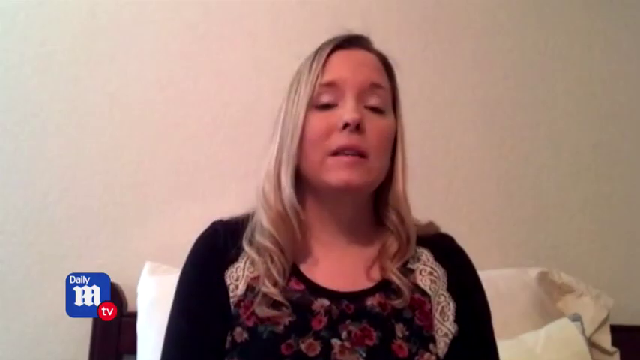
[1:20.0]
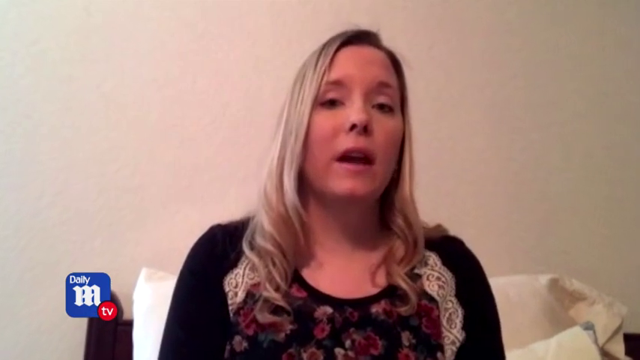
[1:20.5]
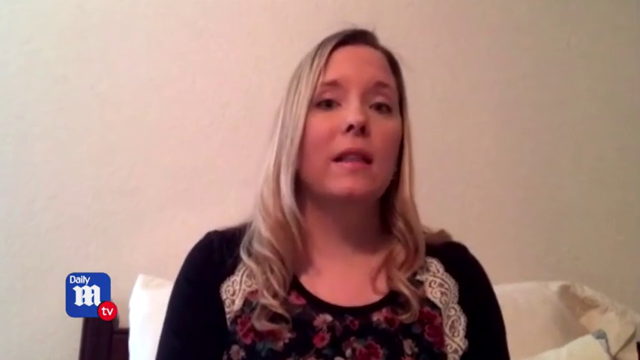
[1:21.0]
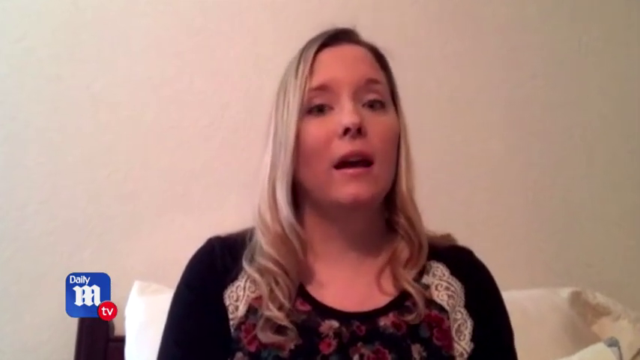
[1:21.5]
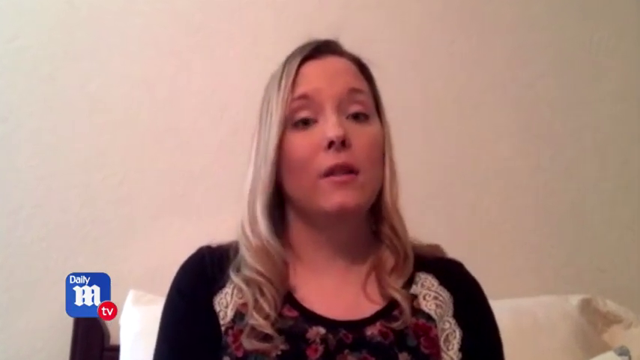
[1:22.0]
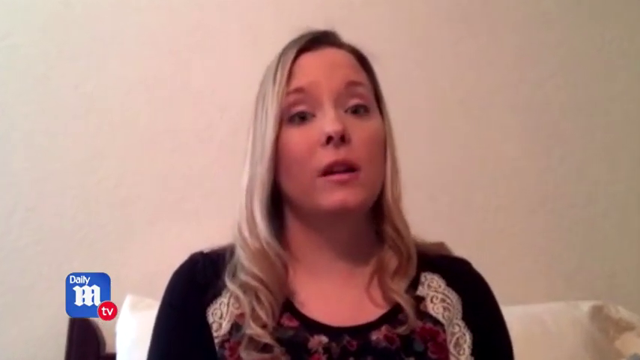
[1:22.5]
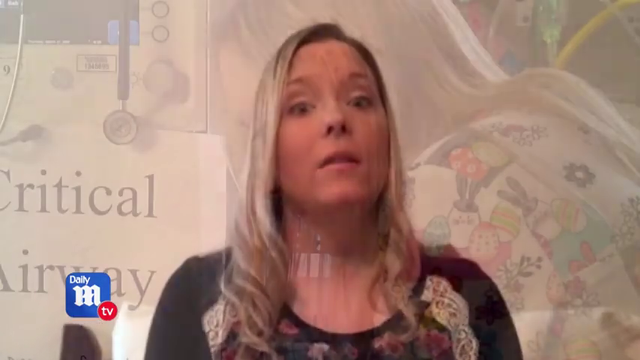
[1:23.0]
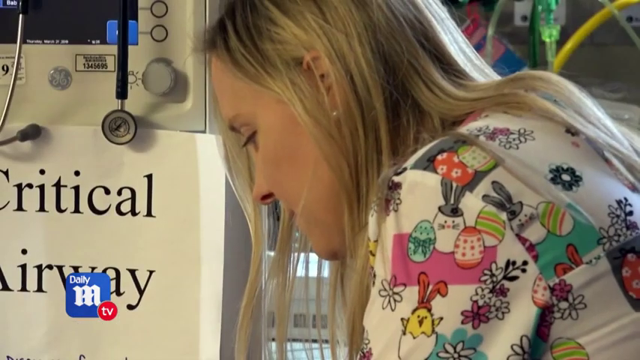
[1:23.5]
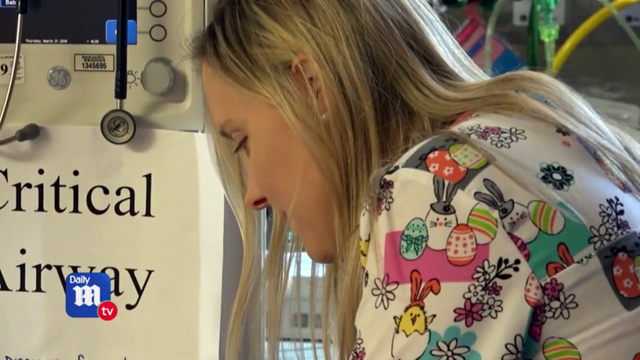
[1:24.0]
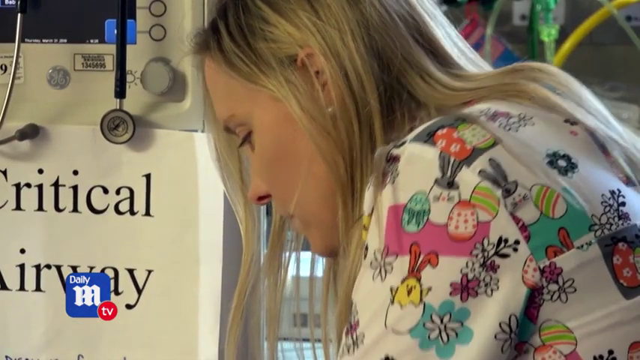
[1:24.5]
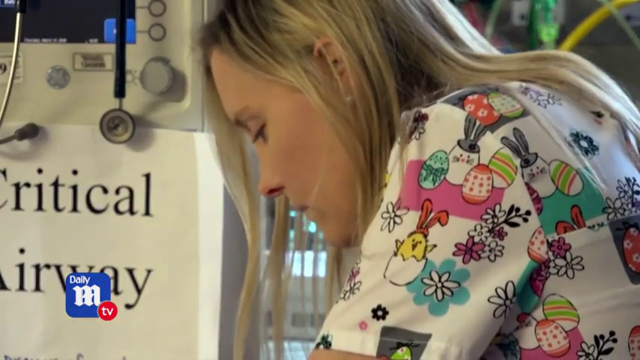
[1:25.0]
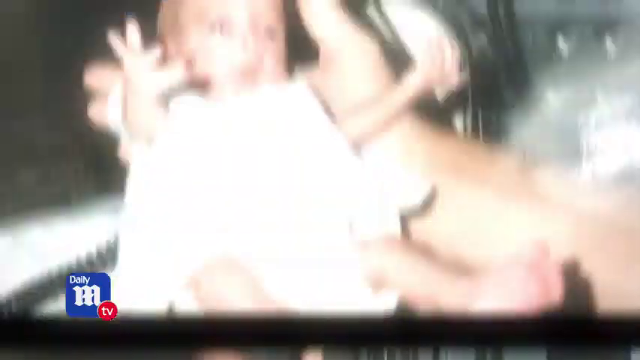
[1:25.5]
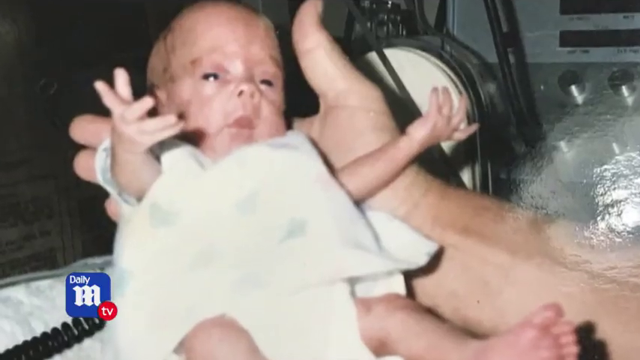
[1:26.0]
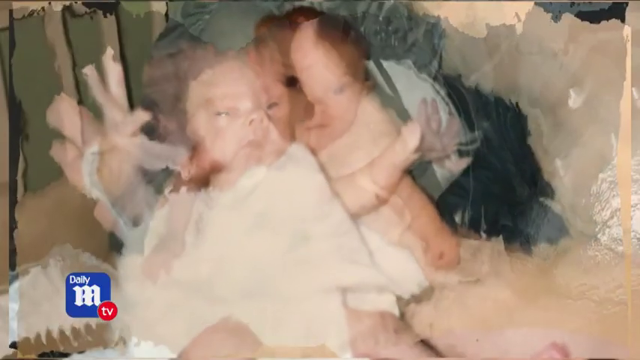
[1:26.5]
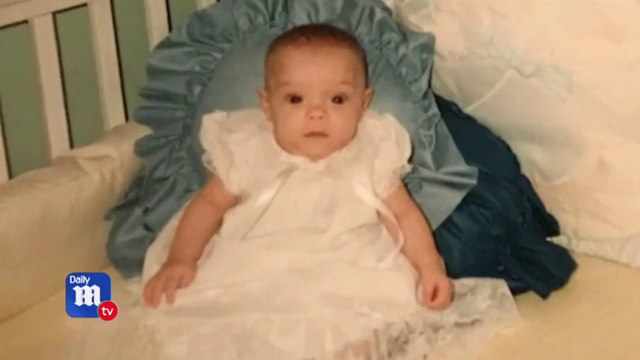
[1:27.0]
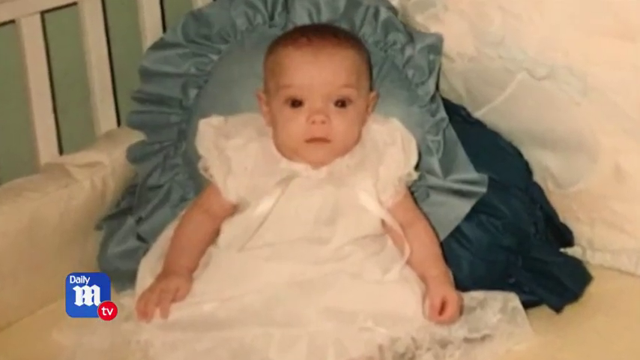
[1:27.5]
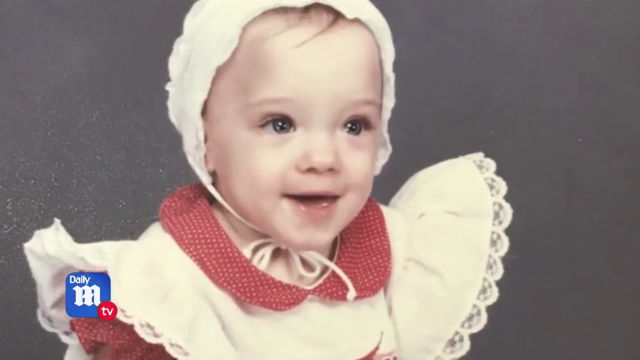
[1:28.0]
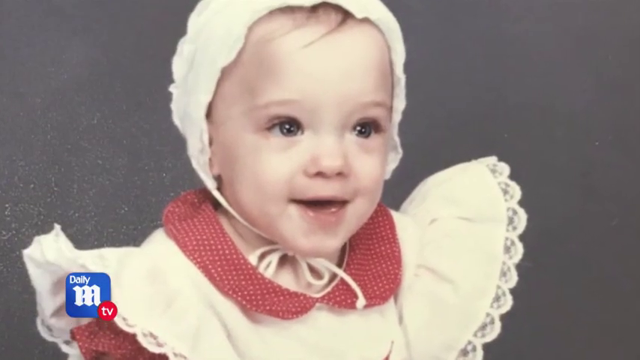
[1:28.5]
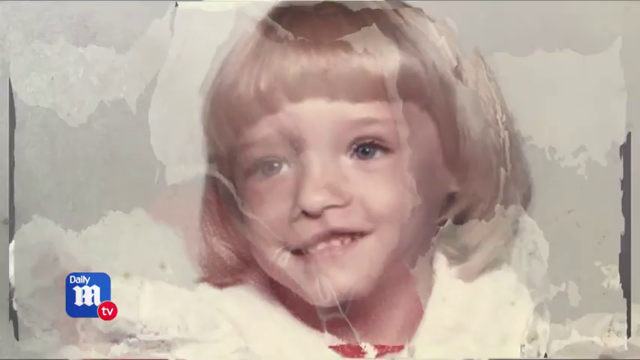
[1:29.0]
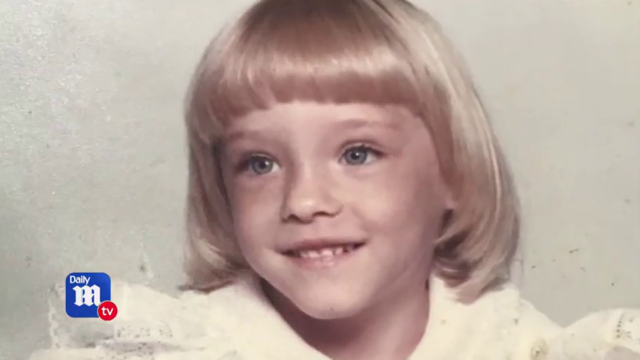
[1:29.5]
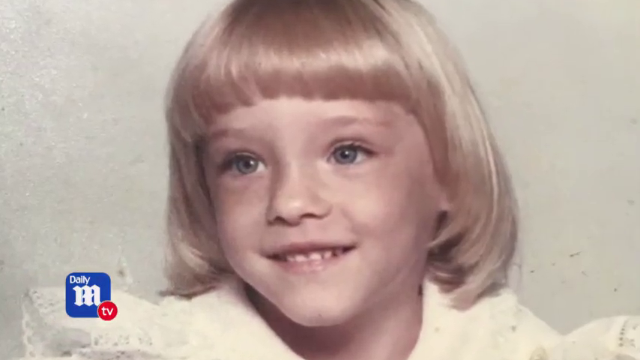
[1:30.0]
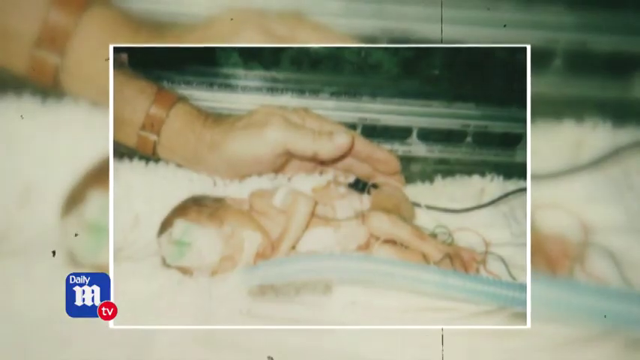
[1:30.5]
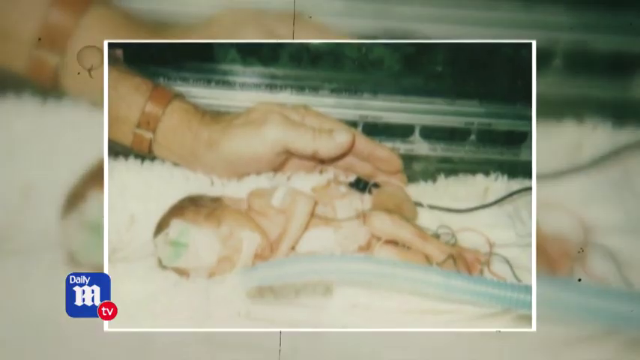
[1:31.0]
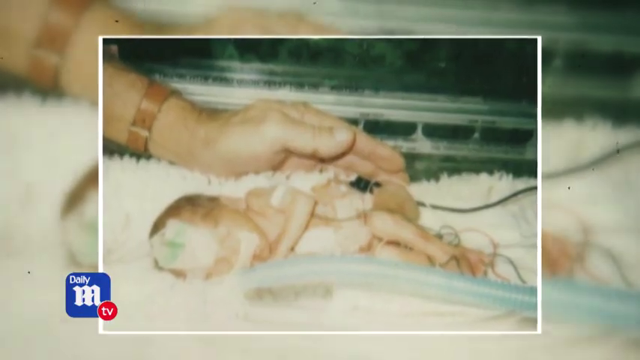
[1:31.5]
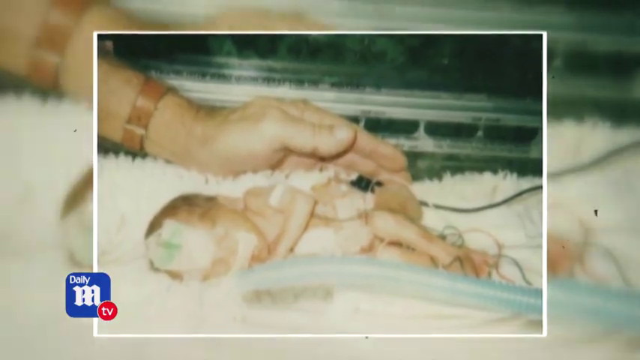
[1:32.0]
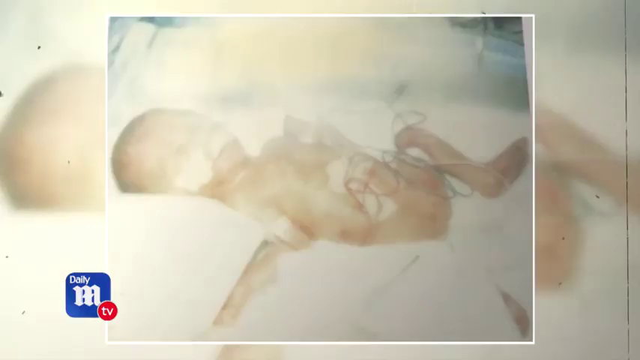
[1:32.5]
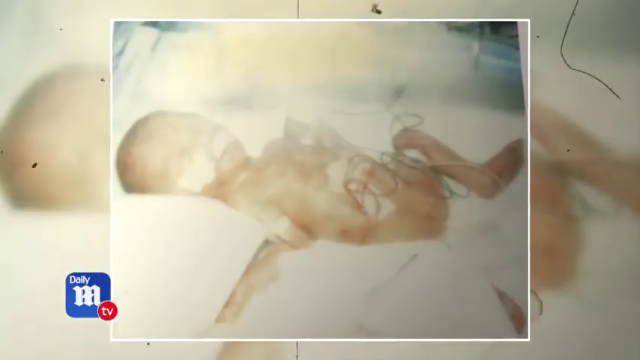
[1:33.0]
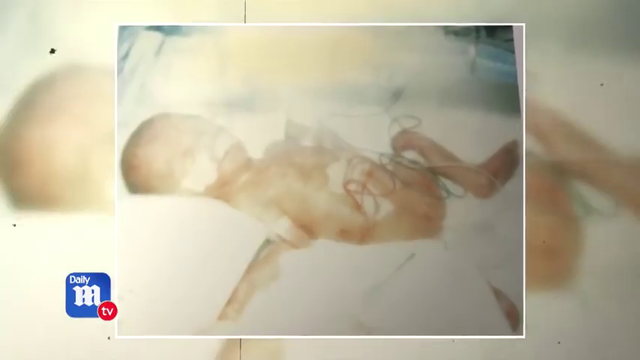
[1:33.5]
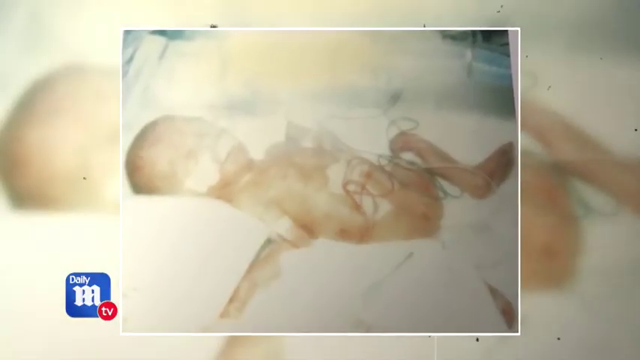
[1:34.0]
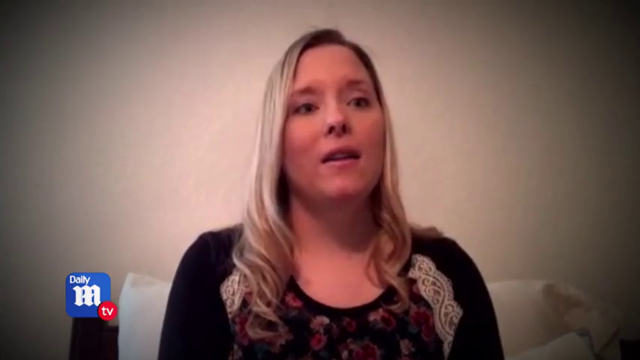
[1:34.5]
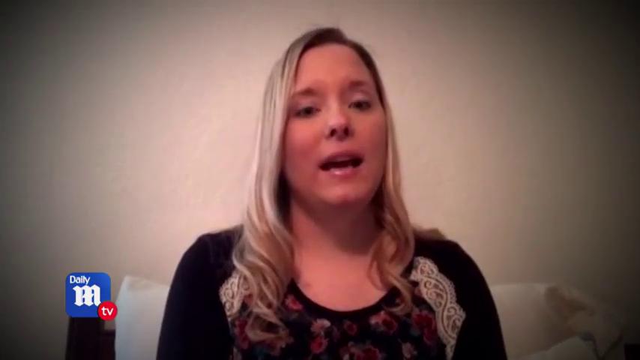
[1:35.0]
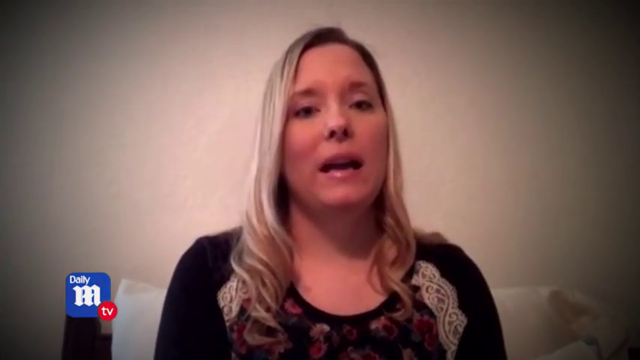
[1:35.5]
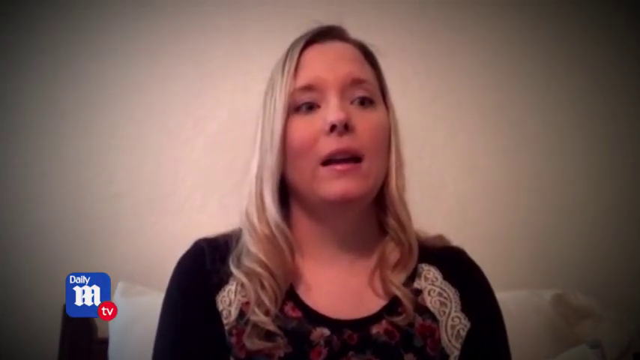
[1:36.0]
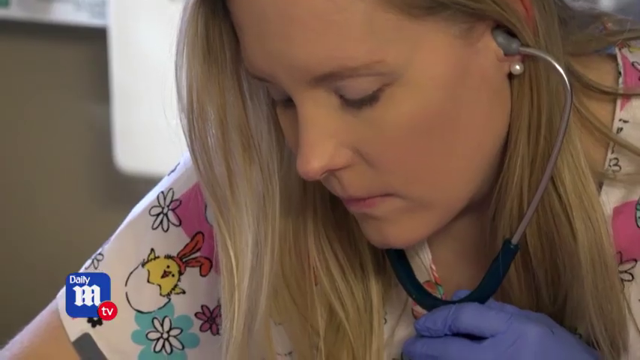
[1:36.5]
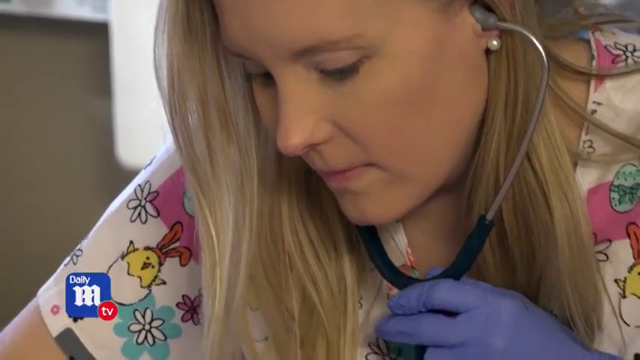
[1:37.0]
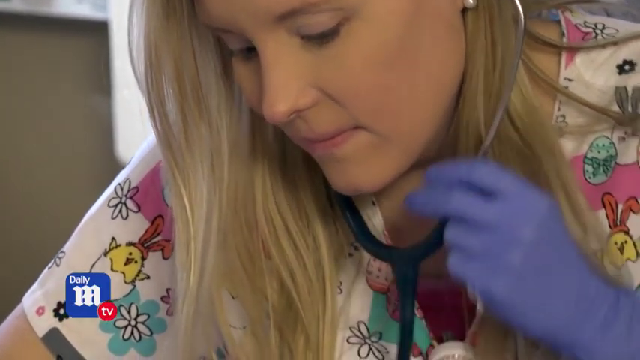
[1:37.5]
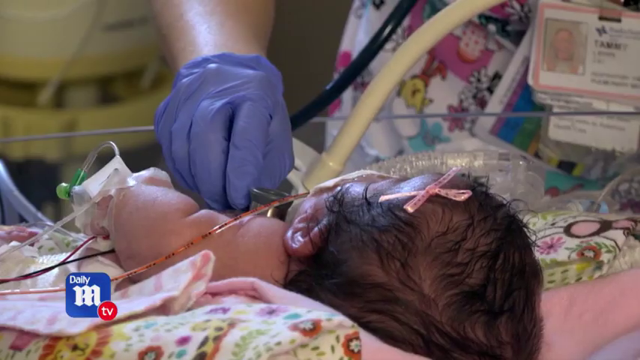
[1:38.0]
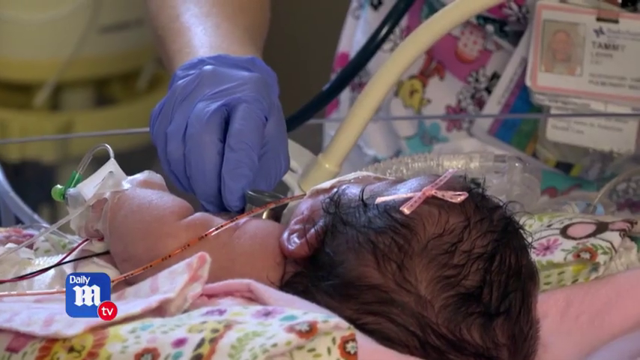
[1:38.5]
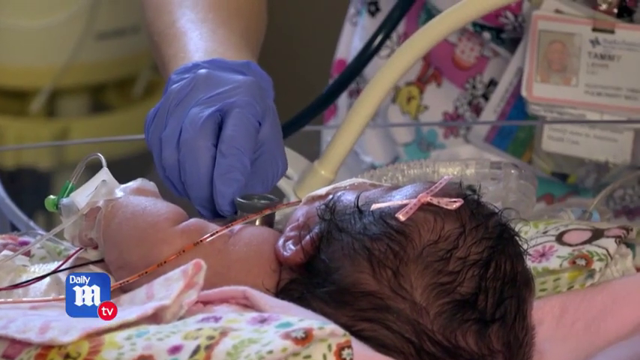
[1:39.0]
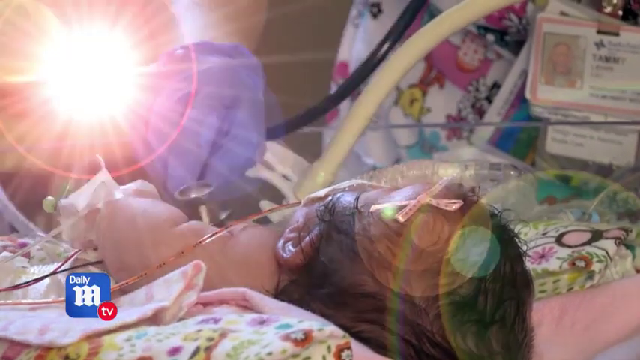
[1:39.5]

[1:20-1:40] Tammy is interviewed in her black outfit and seems to speak with a lot of emotion. She is seen at work in the hospital, where there are incubators, airways and different machines used to save premature children. Where she stands is a label reading "critical airway", and she is nursing a baby that seems to be lying on the hospital bed. Images follow of Tammy when she was young and tiny, of her smiling in a red and white Little Red Riding Hood outfit, and of her possibly in secondary school with a bob and a fringe in her face. Then come images of her being the size of her hand. Next, Tammy, wearing a name tag, works on a little baby at the hospital who appears to have a lot of tubes connected to its mouth. She is holding this baby, and in her hand is a stethoscope, seemingly checking the baby's heart.